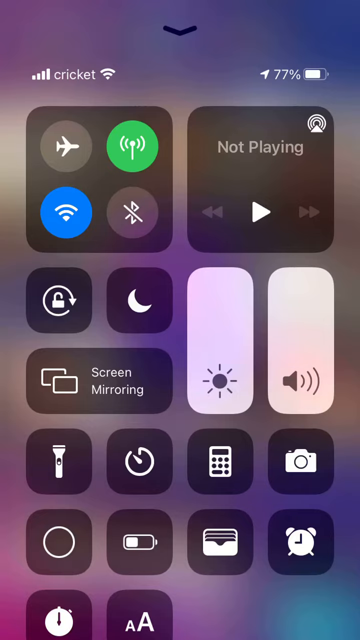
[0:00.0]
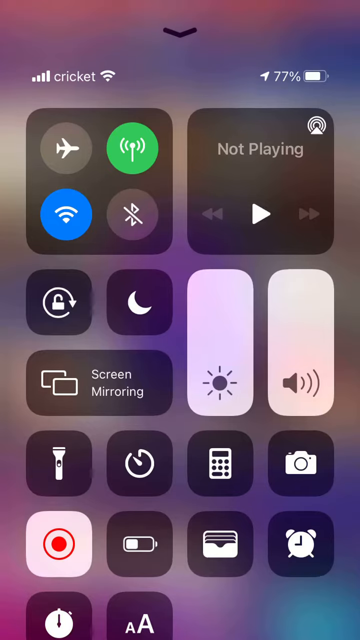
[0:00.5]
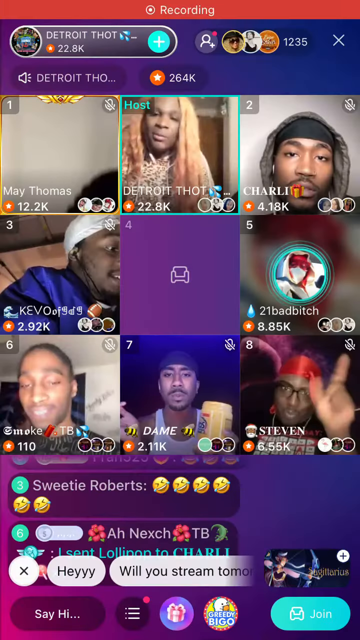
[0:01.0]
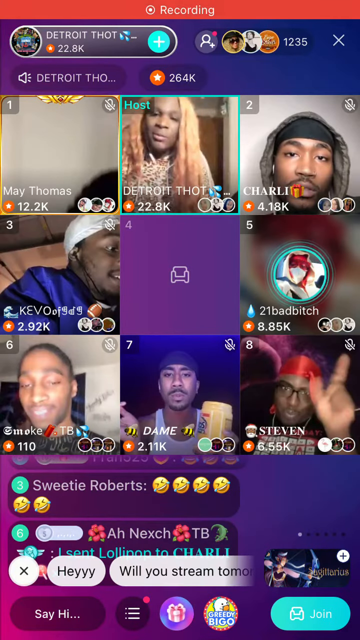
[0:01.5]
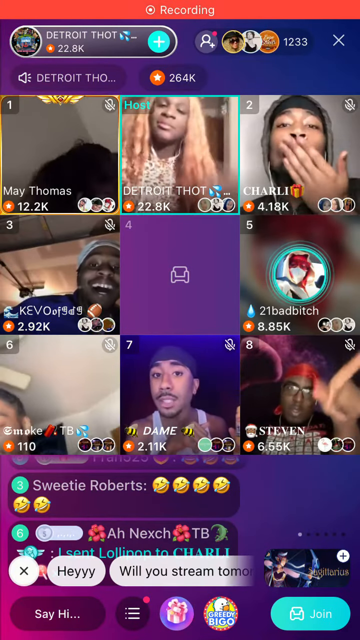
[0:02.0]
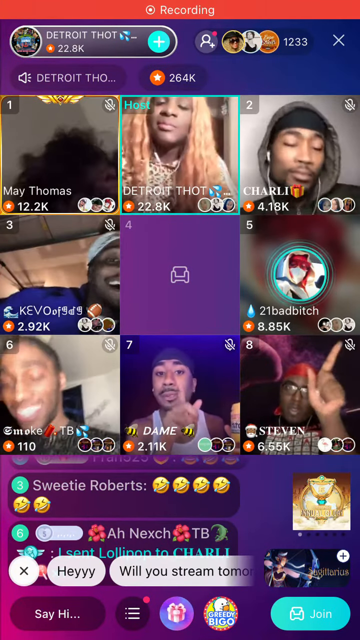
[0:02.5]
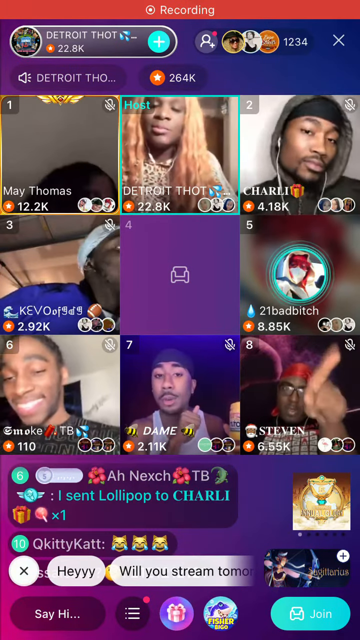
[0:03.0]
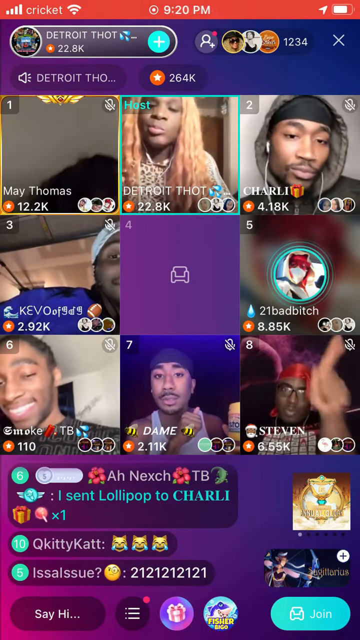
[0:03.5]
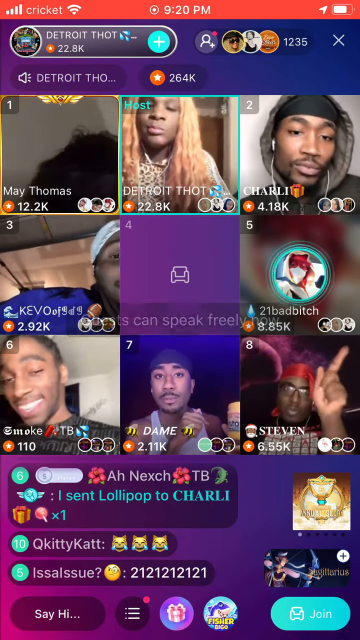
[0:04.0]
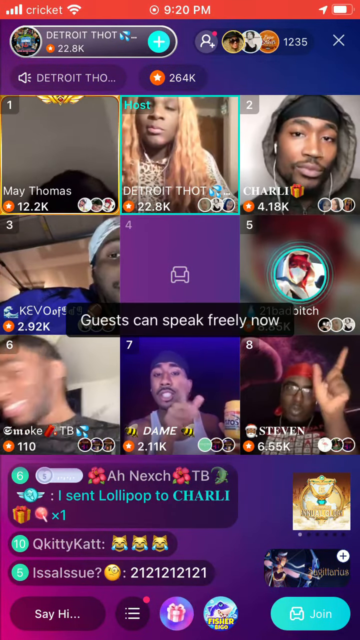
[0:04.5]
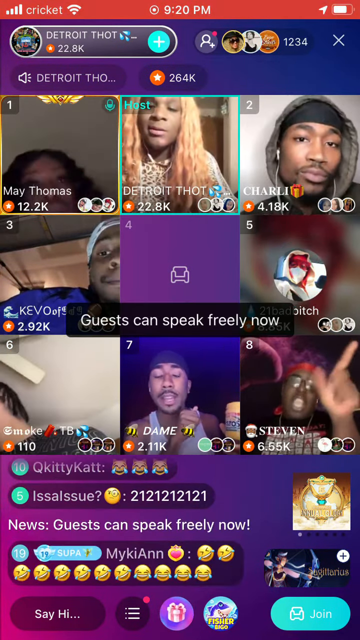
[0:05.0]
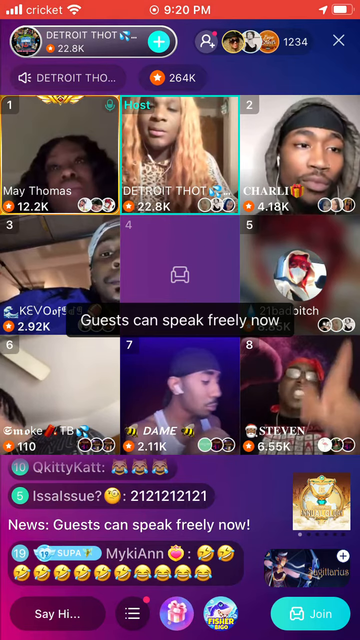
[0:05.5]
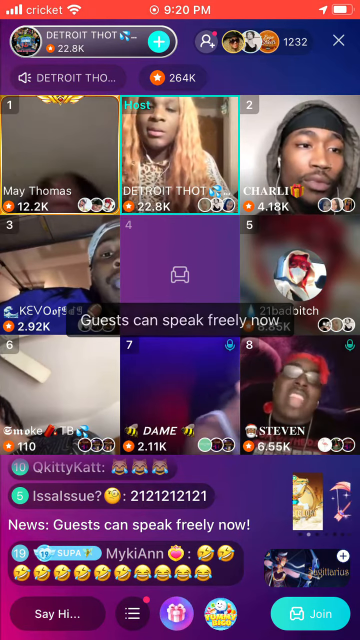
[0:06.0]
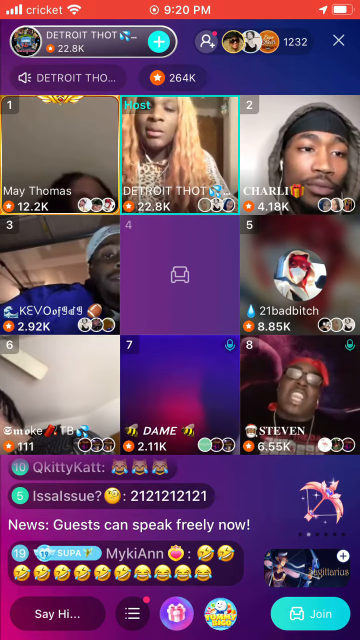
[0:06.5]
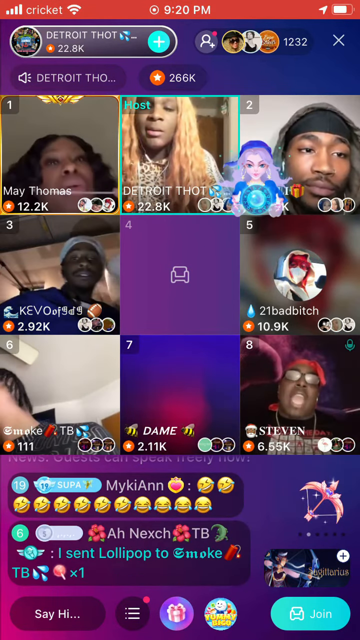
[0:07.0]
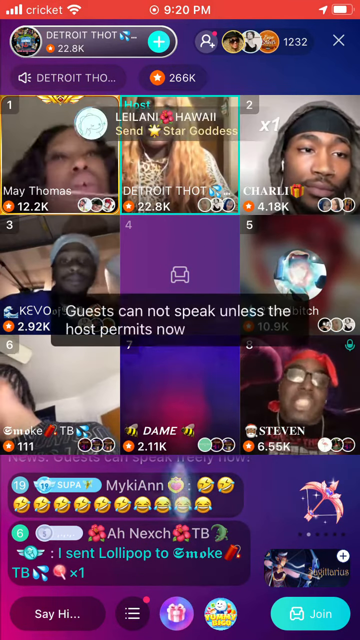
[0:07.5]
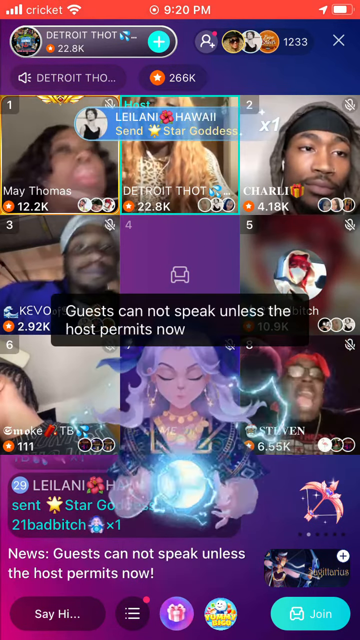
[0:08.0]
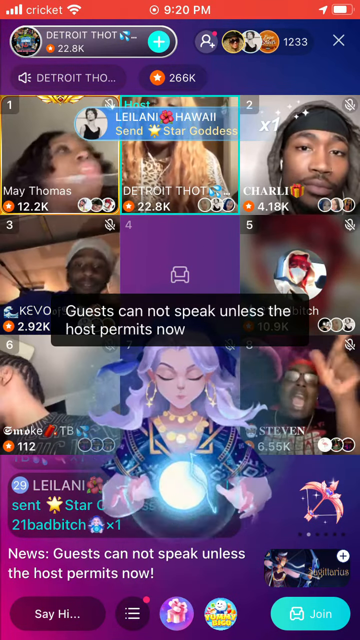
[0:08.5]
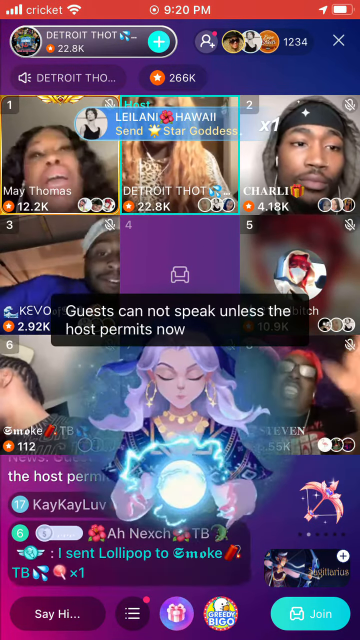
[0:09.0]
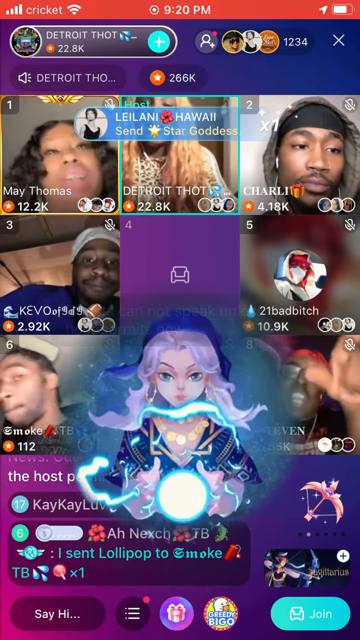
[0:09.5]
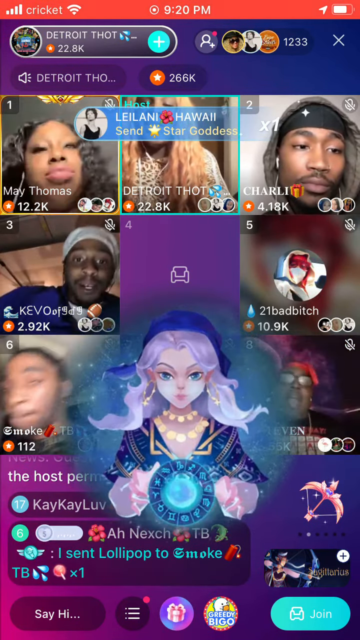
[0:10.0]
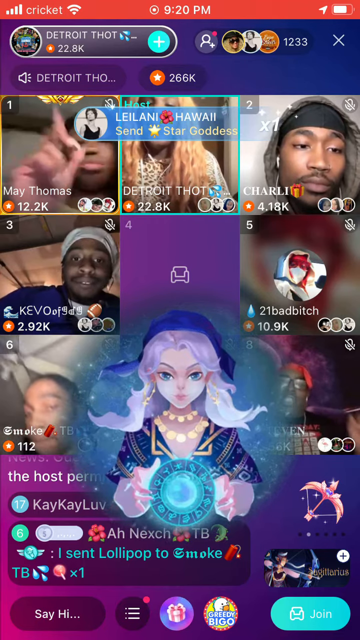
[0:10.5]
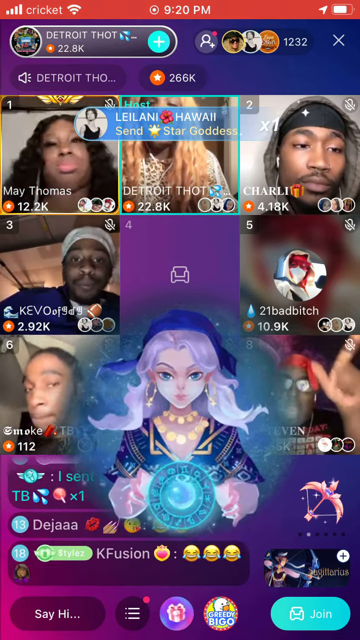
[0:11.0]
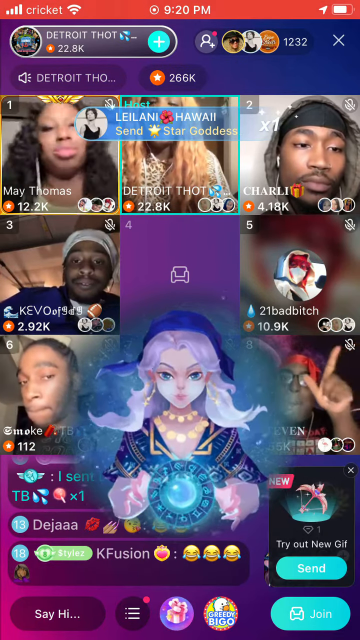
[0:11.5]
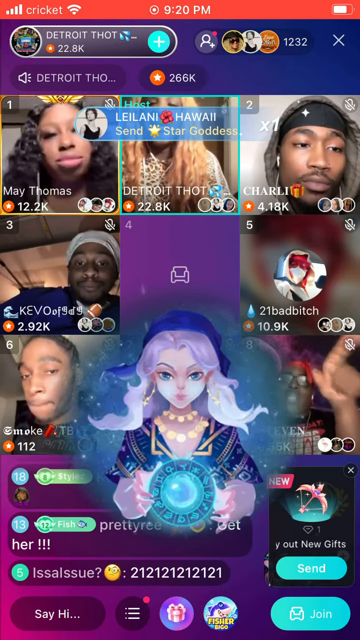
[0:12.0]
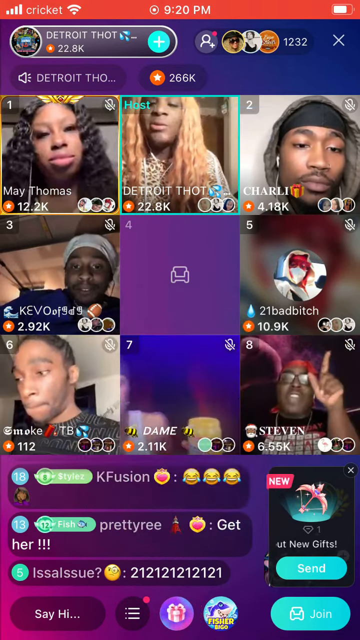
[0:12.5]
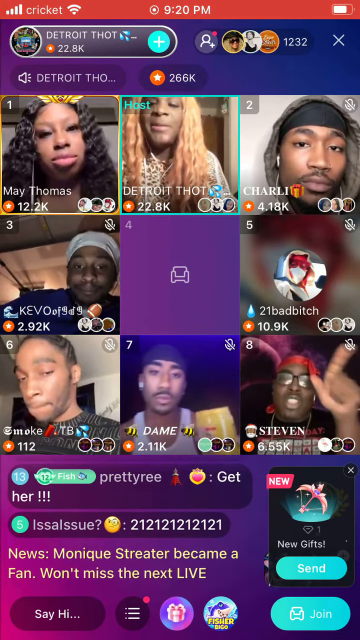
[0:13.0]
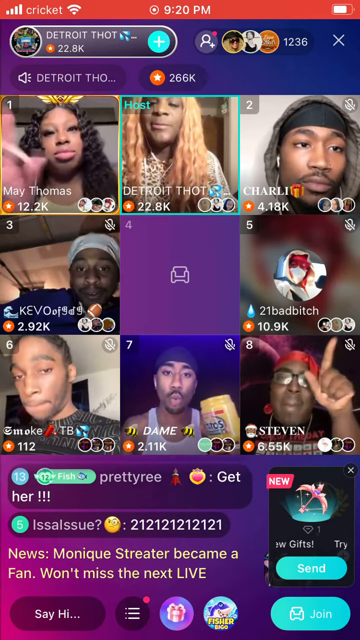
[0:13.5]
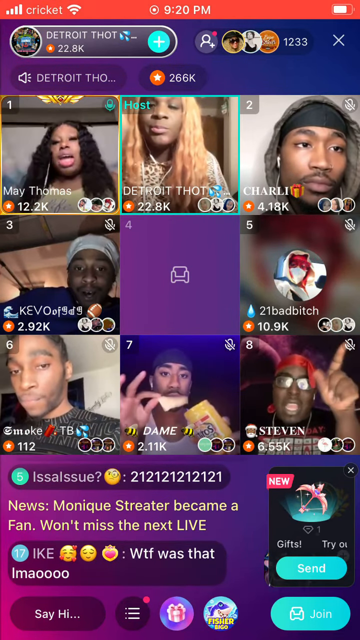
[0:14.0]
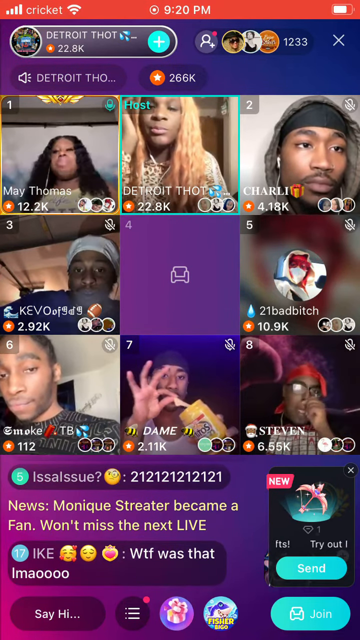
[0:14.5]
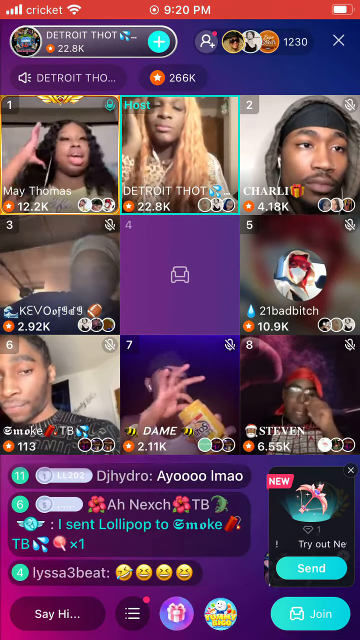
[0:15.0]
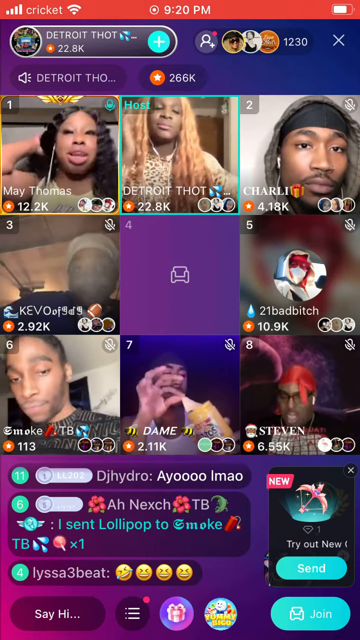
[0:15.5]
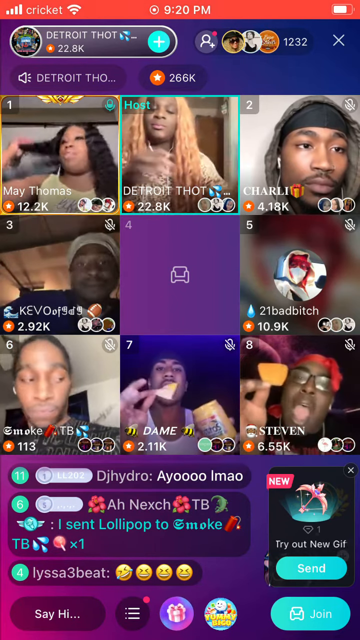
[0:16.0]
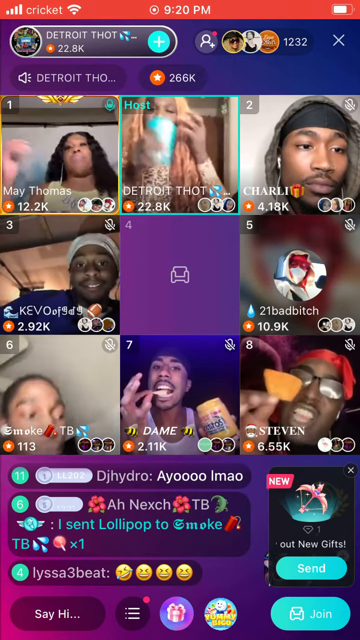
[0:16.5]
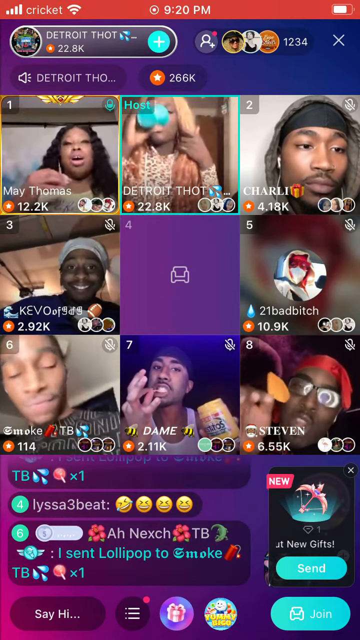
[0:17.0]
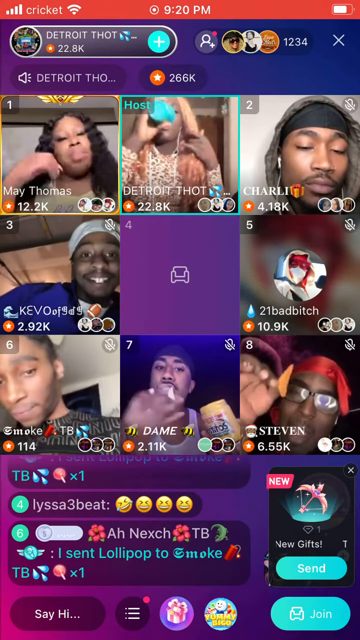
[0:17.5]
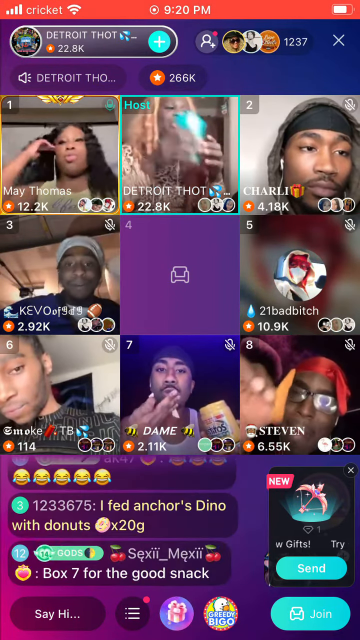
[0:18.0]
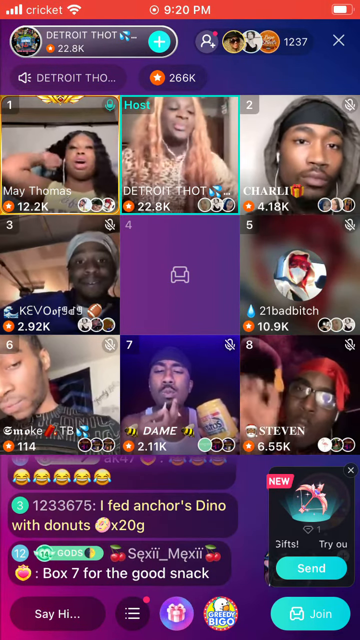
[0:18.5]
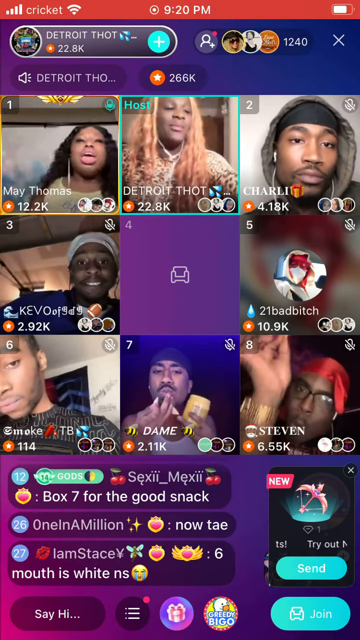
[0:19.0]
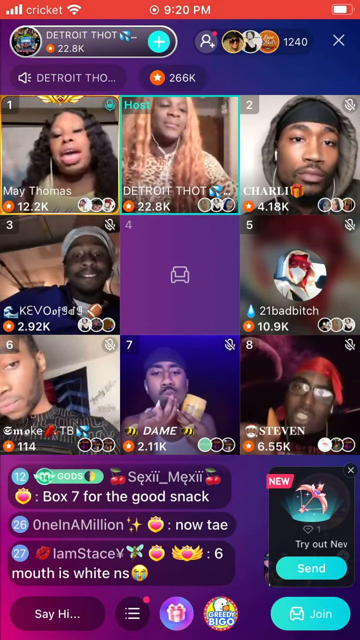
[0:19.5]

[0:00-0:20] A screen recording shows what appears to be a voice call or group chat among eight individuals, along with a live chat containing reactions. A female seems to be saying something, though it is hard to tell what she is saying or doing, and the chat seems to be moving. An anime girl with pink hair appears on the screen. In the top left is a lady, an African American woman with brown skin and black hair, probably around 25. In the middle is a person, probably an African American male, with kind of blond-ish, pretty long dreads, probably around 25. To the right of him is another Black male in a gray hoodie and a black hat, probably 25. Under him to the left is another Black African American male in a white cap, probably 25. To the right of that is a person with kind of an anime icon. There are a few more Black African American people, apparently one male and two female, one of them wearing a reddish do-rag and glasses. A live stream chat is also visible.